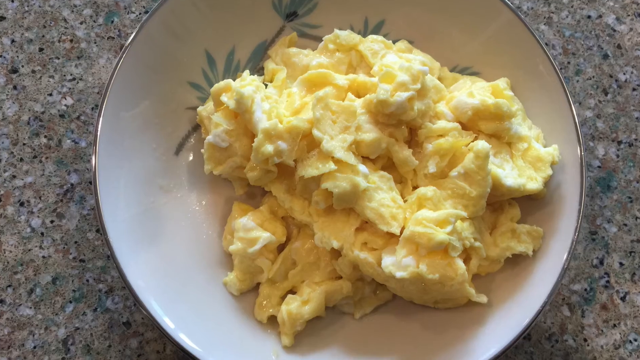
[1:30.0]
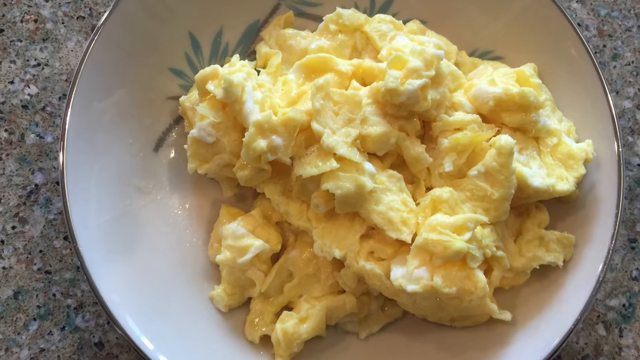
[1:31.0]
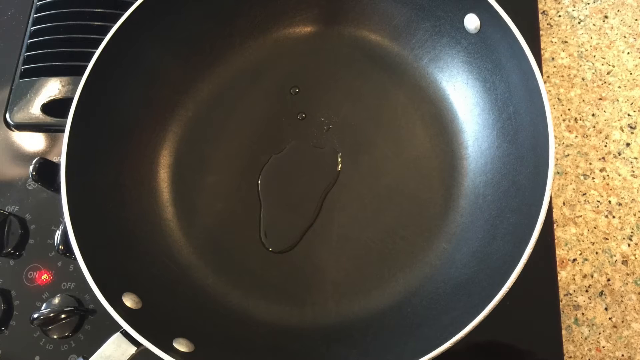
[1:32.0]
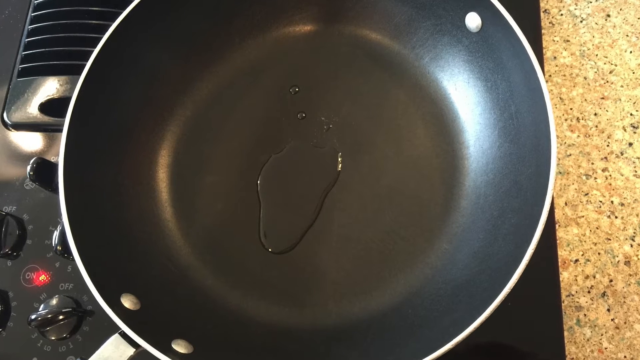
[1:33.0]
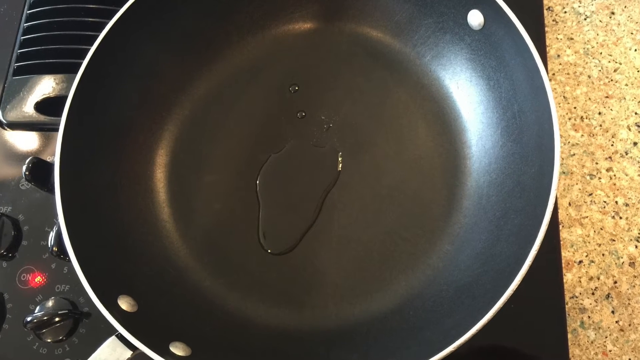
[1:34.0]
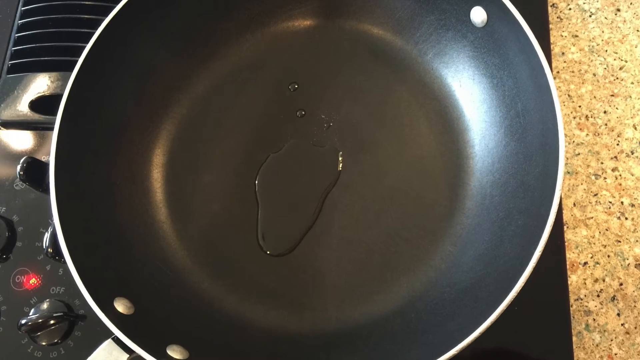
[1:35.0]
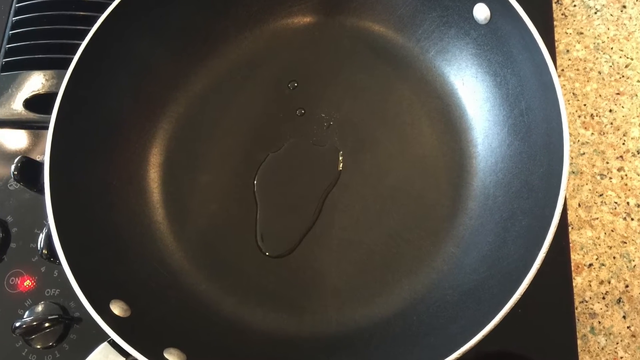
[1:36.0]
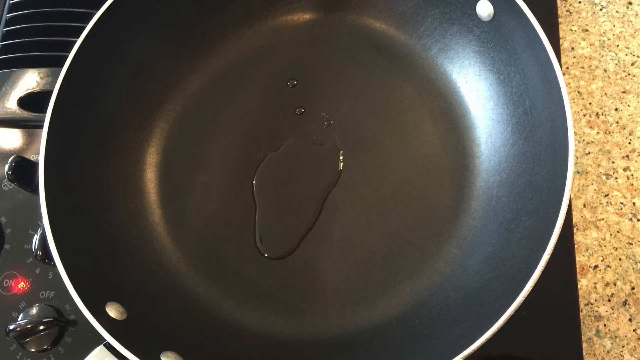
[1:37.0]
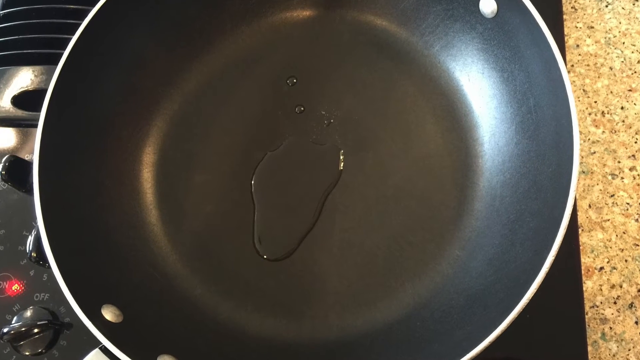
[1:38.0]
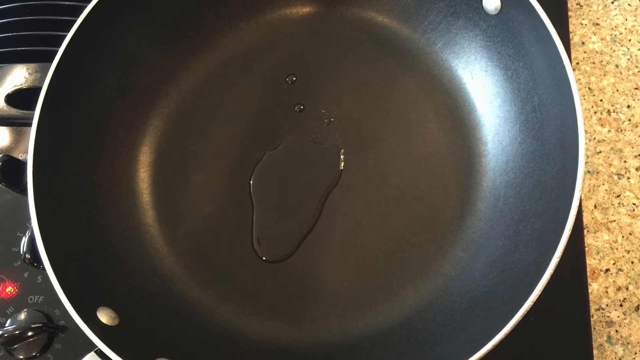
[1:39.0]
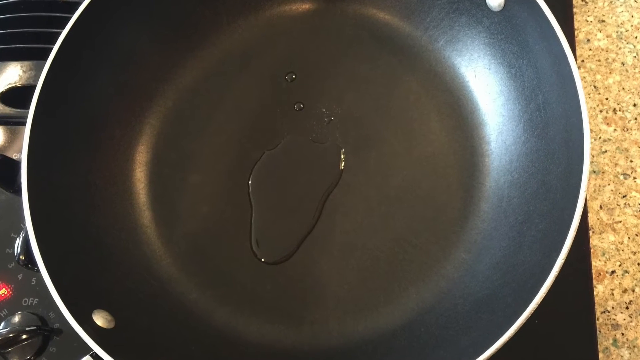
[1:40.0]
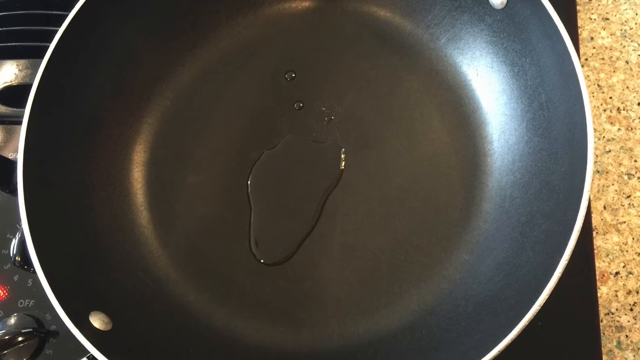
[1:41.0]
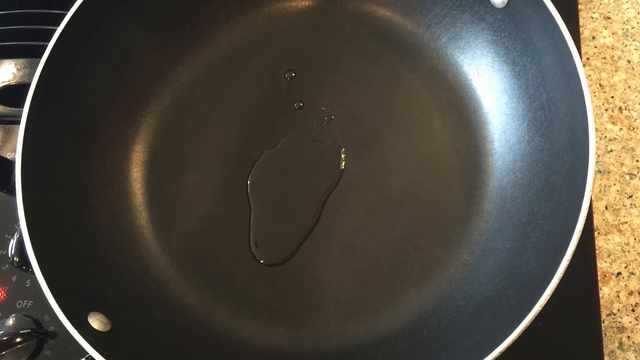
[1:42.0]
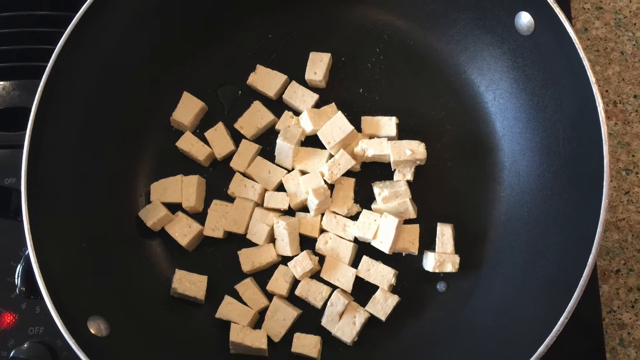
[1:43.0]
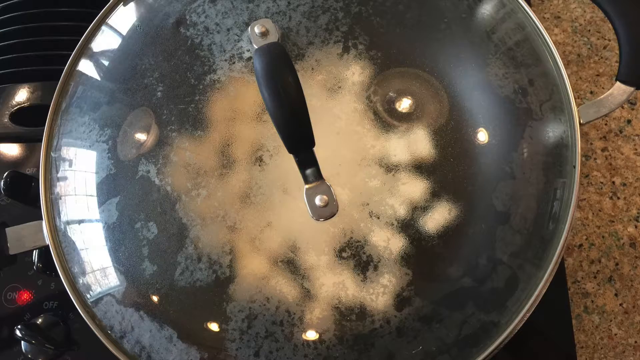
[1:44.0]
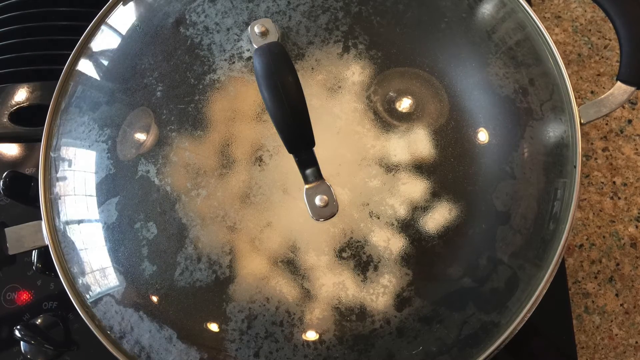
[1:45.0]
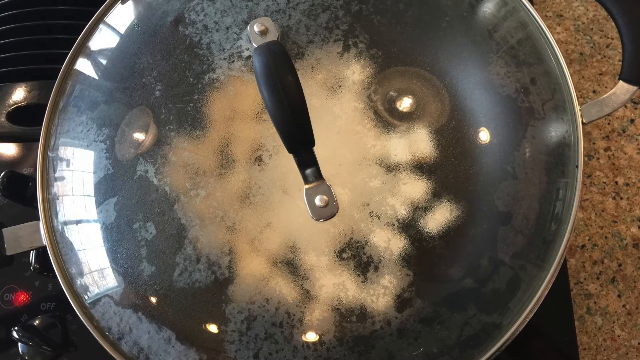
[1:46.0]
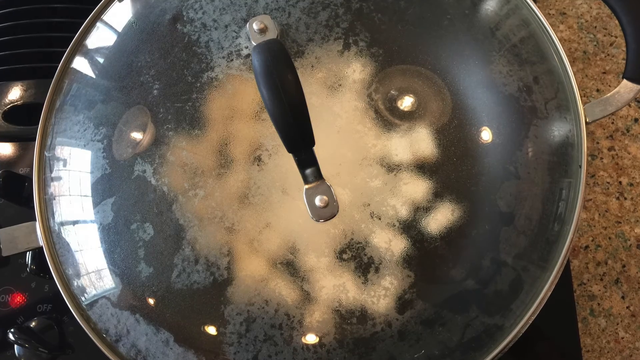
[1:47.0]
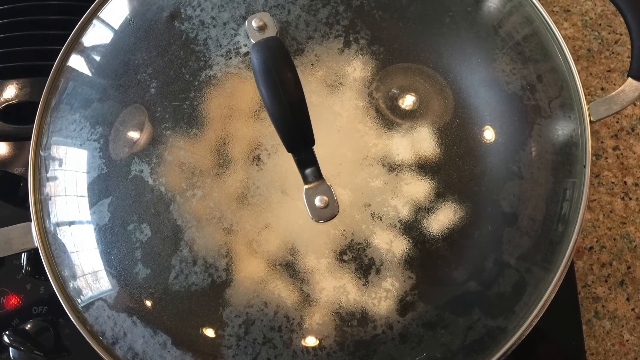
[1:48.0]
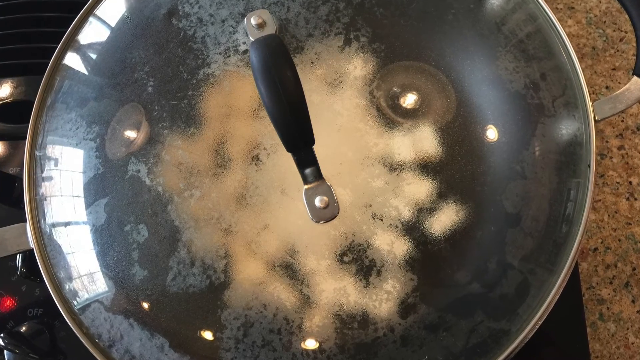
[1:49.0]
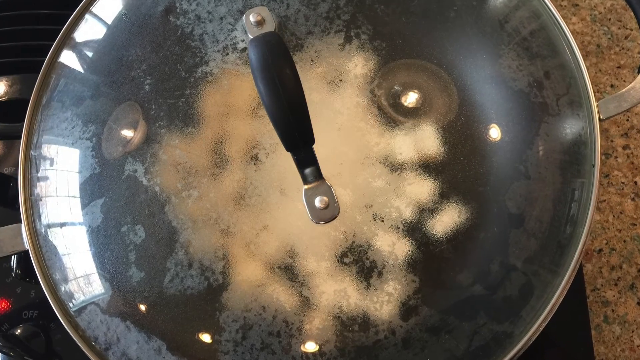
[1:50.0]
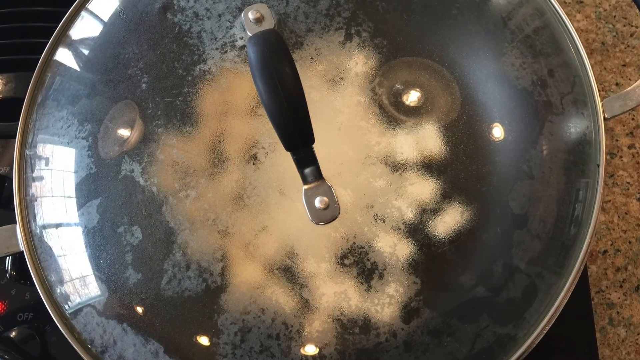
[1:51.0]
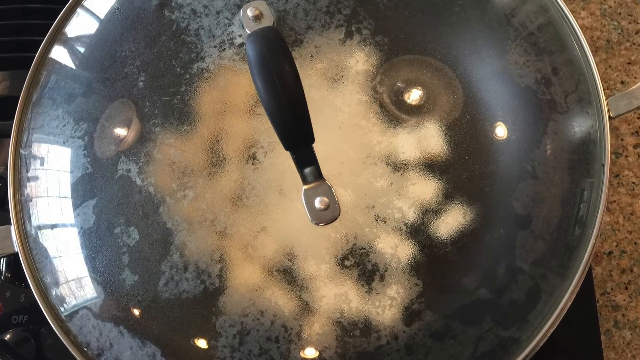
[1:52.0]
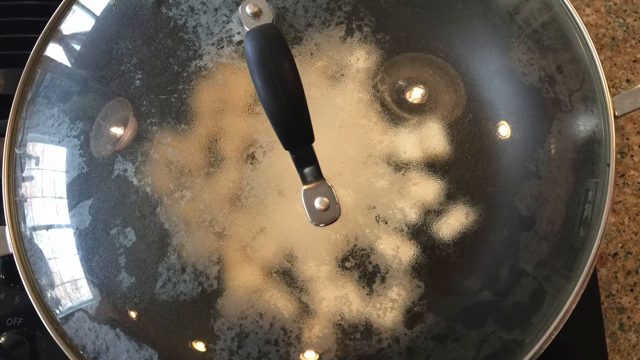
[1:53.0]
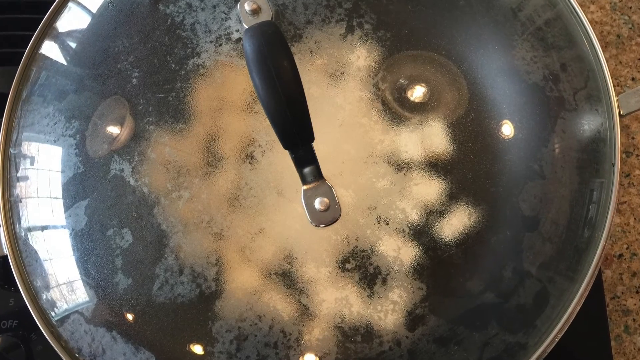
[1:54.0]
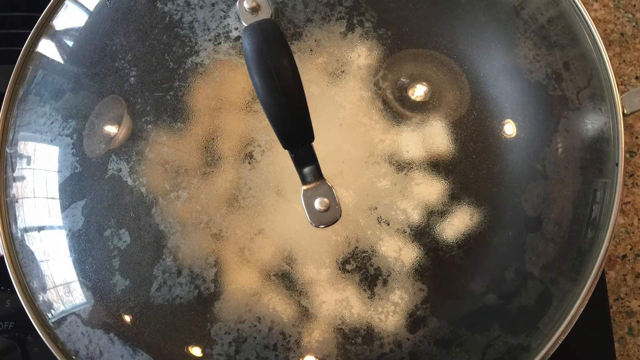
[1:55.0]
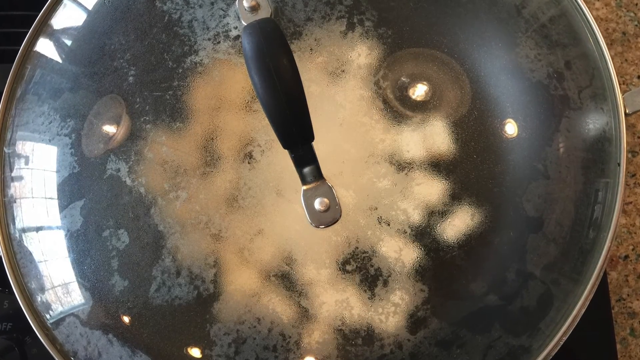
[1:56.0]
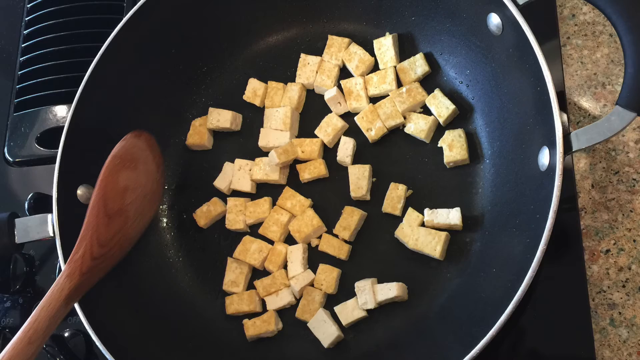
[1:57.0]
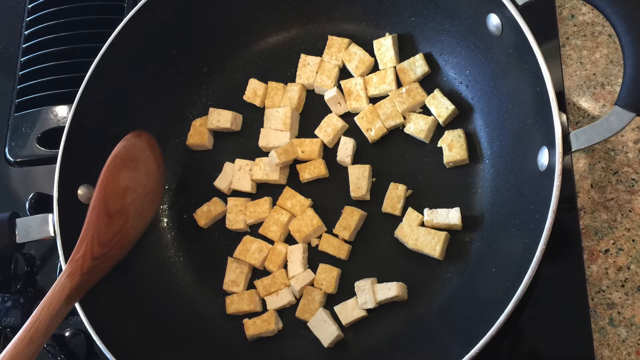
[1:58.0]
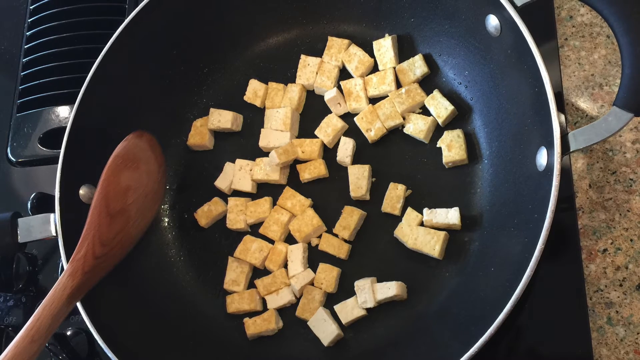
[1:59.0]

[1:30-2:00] The finished eggs are shown very quickly: the man shows the bowl of eggs he just made, white and yellowish and very fluffy. A brown branch with palm leaves is at the top, probably about three clusters, with a couple of small black balls in the middle of one. The camera zooms in, then returns to what appears to be the same image as before, with the two dots above the oil, again zooming in. Next is a zoomed-in shot of a lot of tofu in the wok, probably about 25 to 30 pieces, centered, mostly in one layer with a few on top of each other. Somebody puts the lid on, and condensation and steam appear underneath it. The lid has a black handle in the middle with little bolts above and below it. Reflections of the hanging lights, round domes with a bulb in the middle, are visible on the left and right sides of the handle. Then the spoon is shown lying on the left side of the wok. The tofu looks a little more cooked: probably about 6 or 7 pieces are still white, while others have brown spots where they are searing.